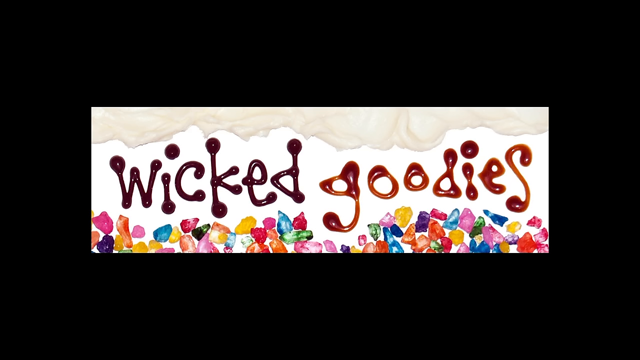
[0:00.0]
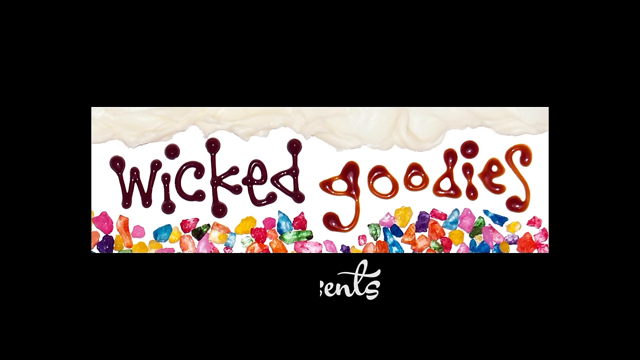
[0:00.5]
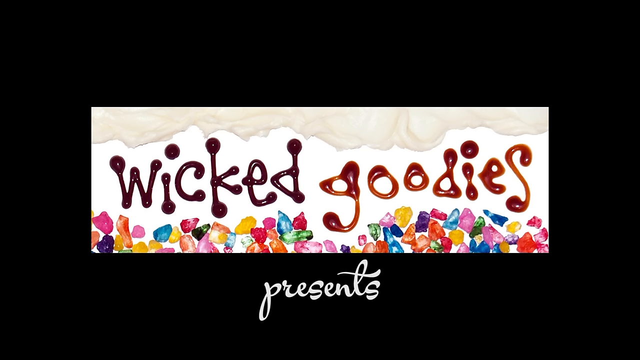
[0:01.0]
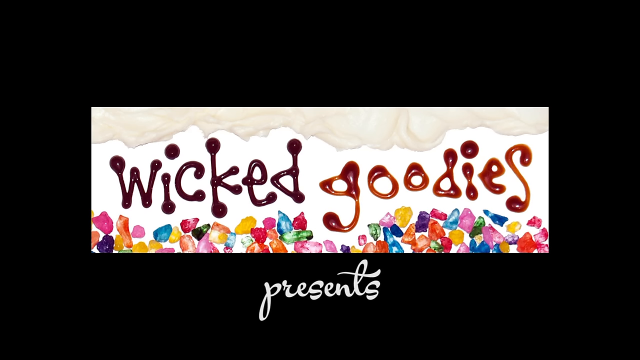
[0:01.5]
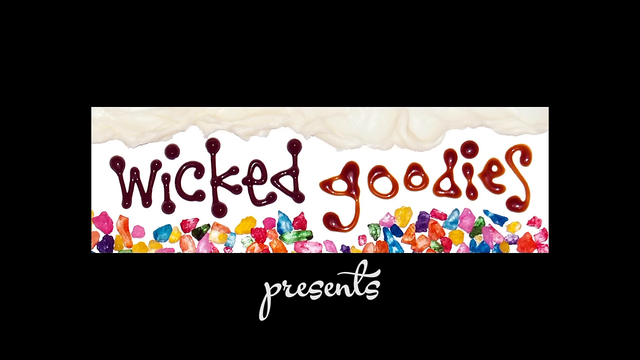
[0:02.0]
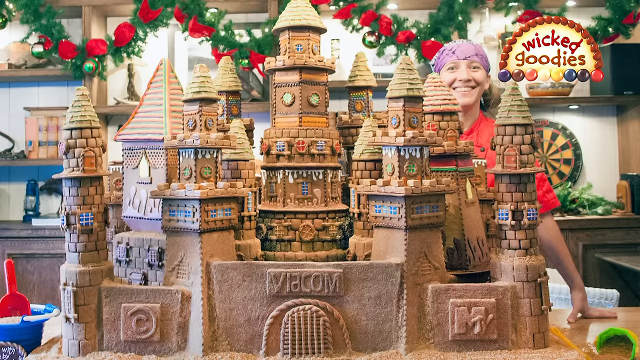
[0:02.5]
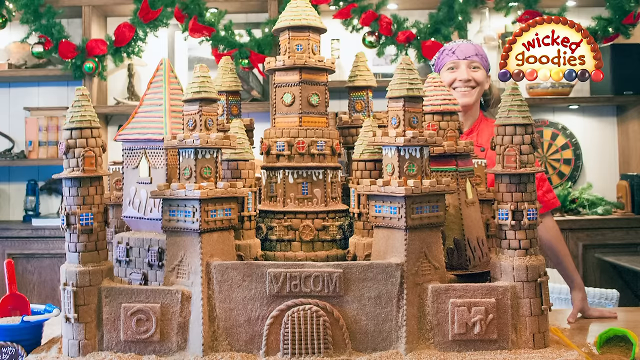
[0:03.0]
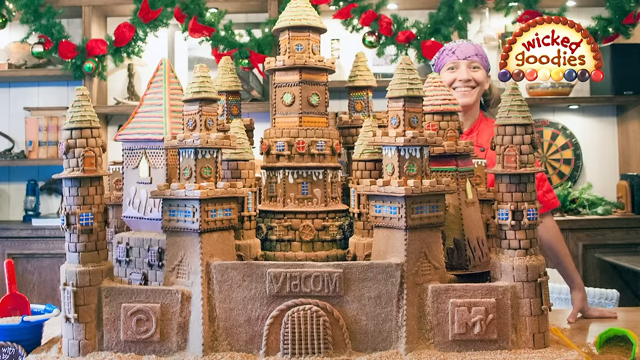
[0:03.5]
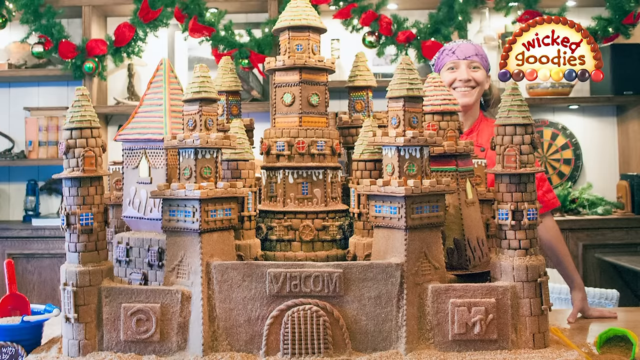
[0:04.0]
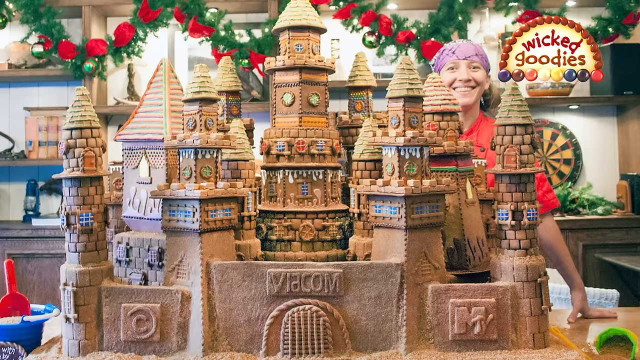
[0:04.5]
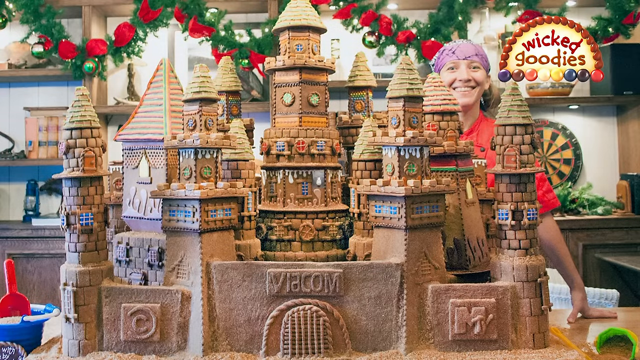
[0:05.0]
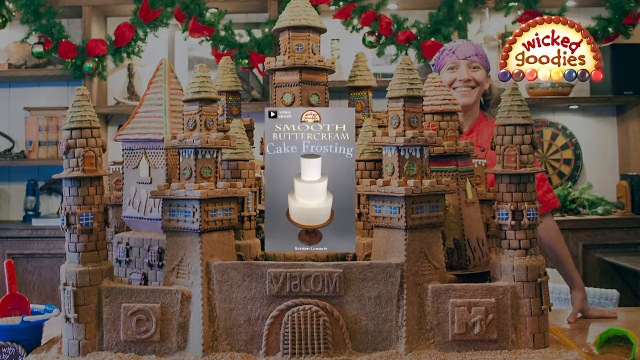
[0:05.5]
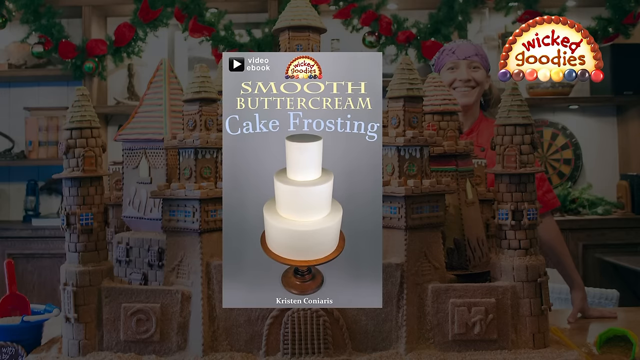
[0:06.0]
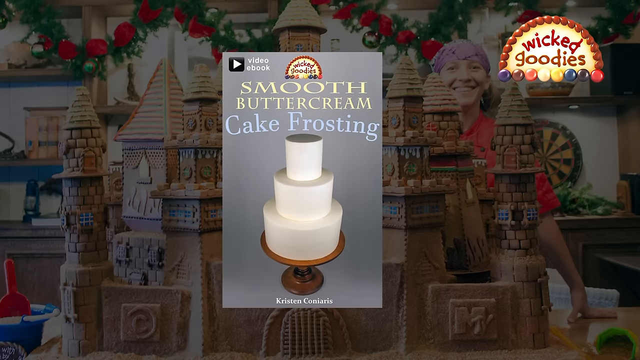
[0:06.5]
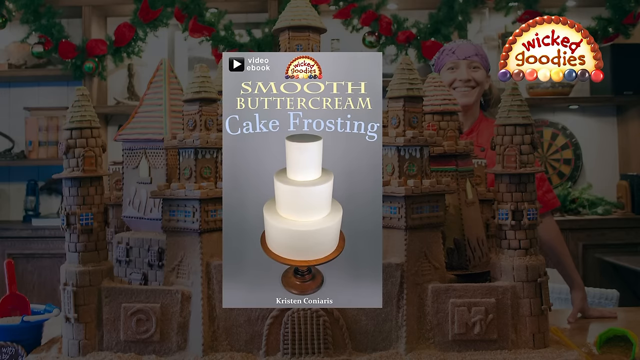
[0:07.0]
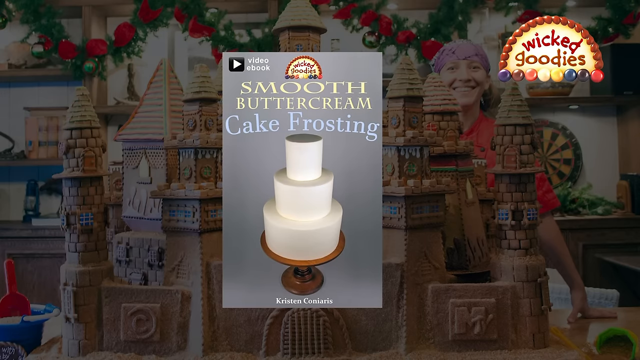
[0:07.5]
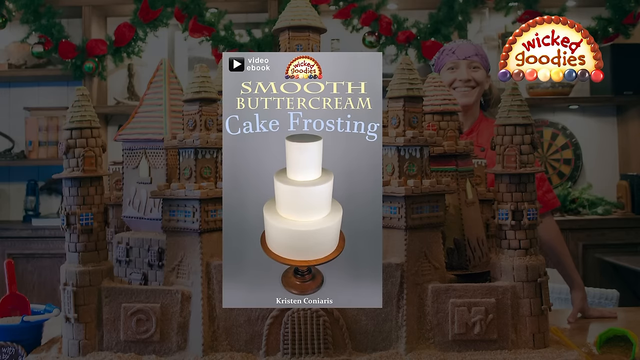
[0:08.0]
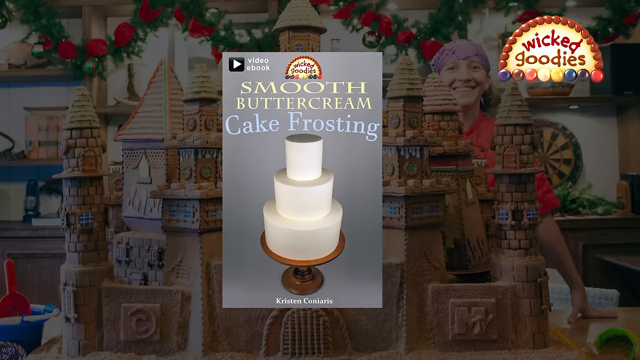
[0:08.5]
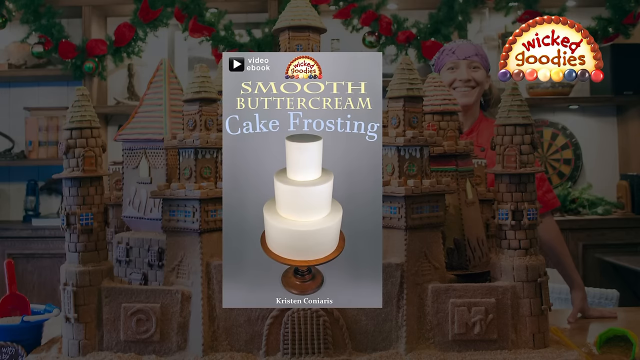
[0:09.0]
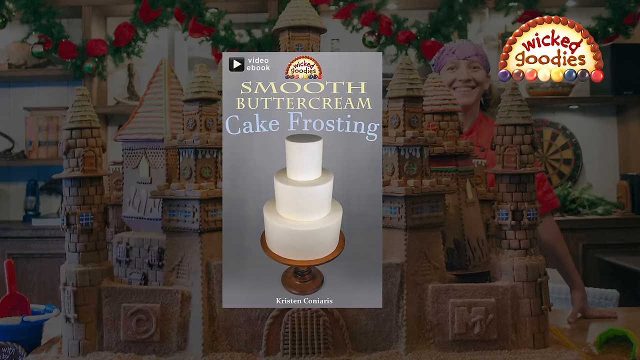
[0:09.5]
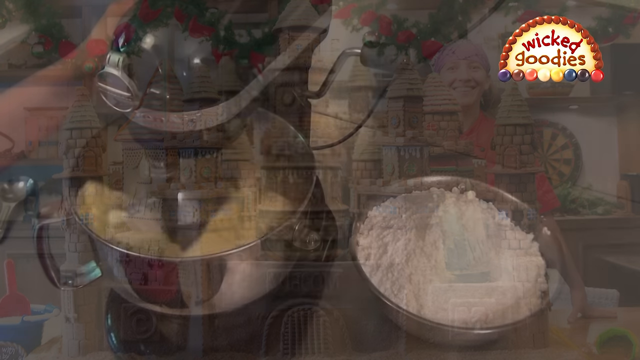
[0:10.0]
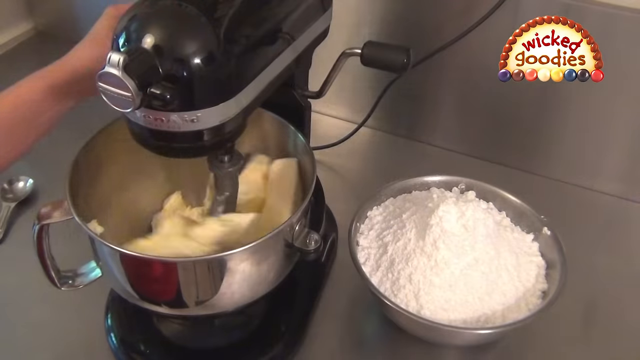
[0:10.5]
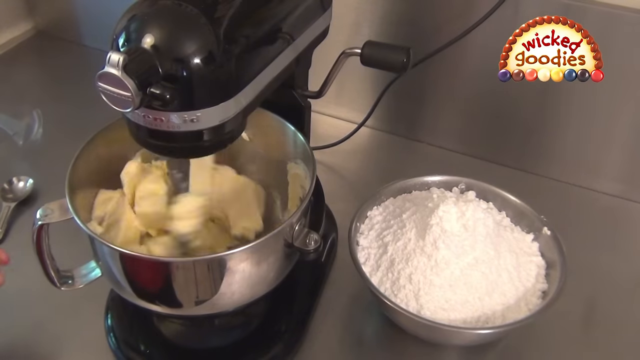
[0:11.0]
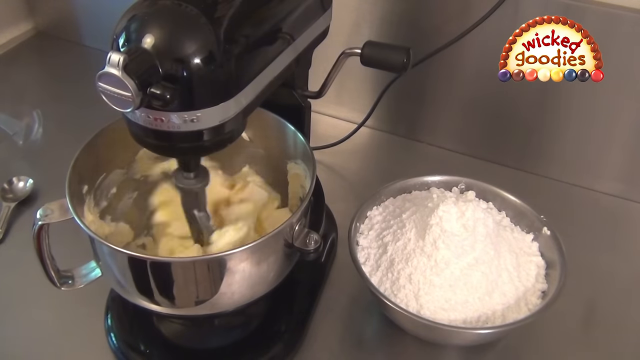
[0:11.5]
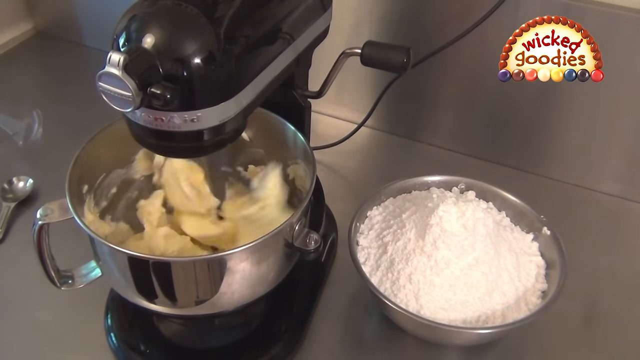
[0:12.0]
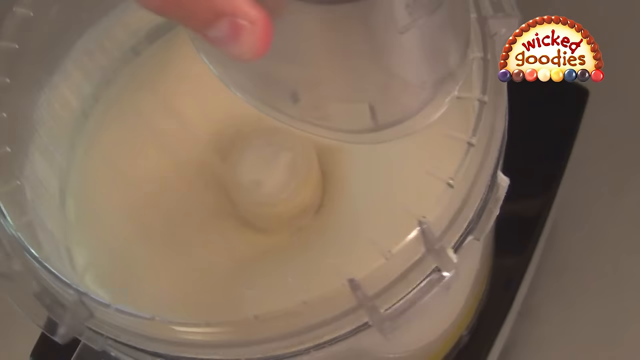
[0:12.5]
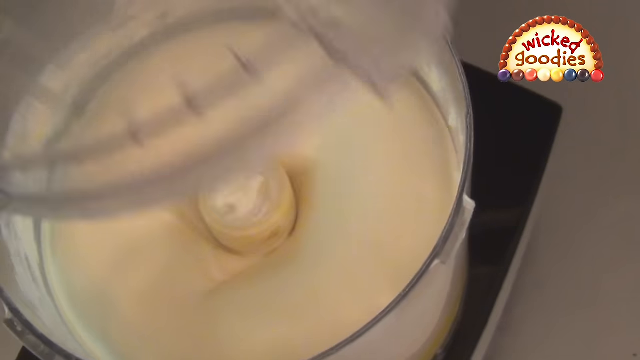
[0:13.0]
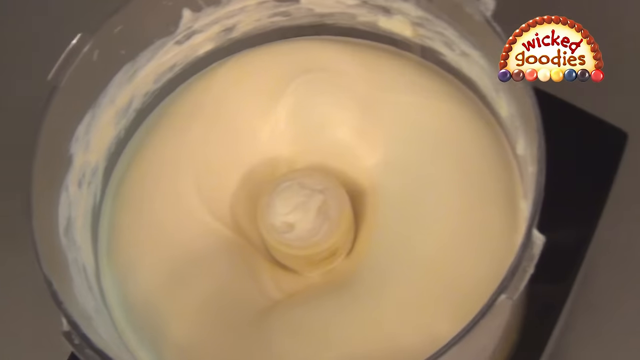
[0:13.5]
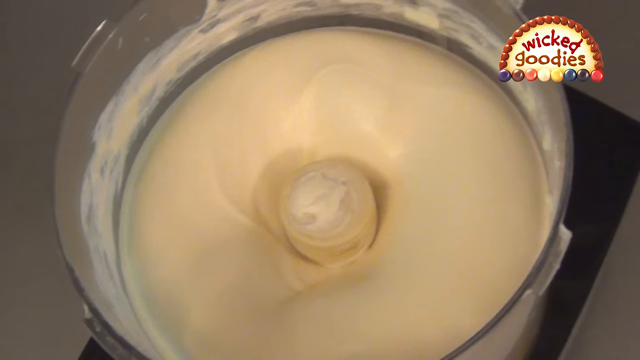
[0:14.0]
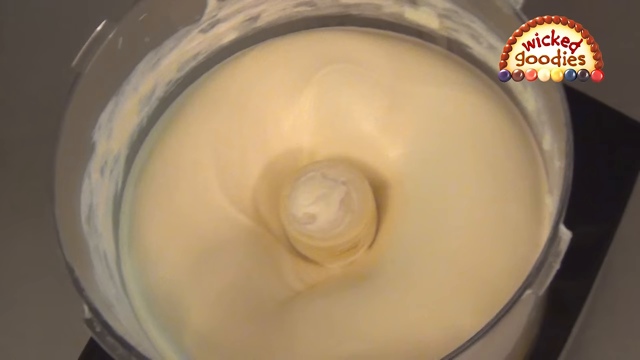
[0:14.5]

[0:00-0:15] An opening title indicates smooth buttercream cake frosting presented by a company called Wicked Goodies, with "Wicked Goodies" written in what seems like a dark red and an orange food dye, with sprinkles underneath. Next, a woman wearing what seems to be red cooking attire and a purple bandana smiles proudly in front of what seems to be a massive castle. There are cookies and frosting on it; the castle looks to be gingerbread, as everything is brown with hints of red, green and orange from candies and white frosting, though it is unclear whether it is a gingerbread house or a cake. Text pops up that says "smooth buttercream cake frosting." The video then cuts to a close-up of what seems to be a black KitchenAid mixer spinning a yellow substance. Everything seems to be on a gray counter, and next to the mixer is a silver bowl, seemingly another metal bowl, with a powder-like substance inside. Then a different blender with a yellow blend inside is shown; it might be butter.